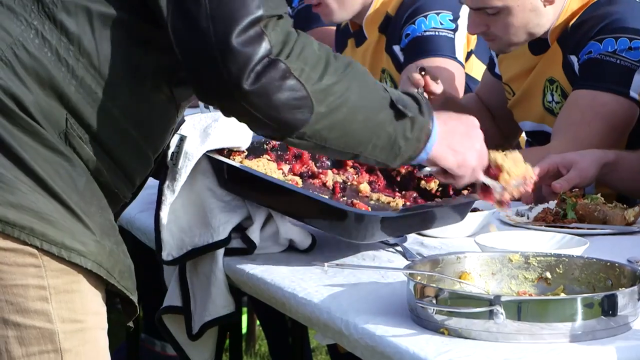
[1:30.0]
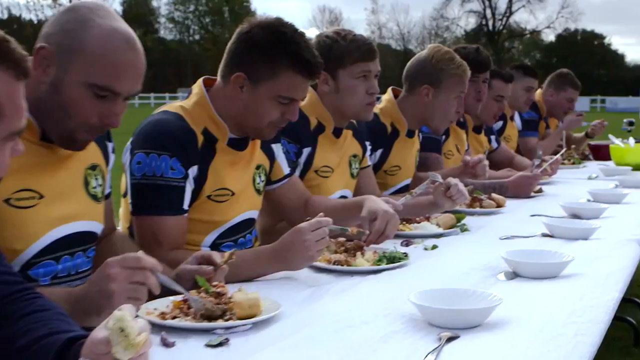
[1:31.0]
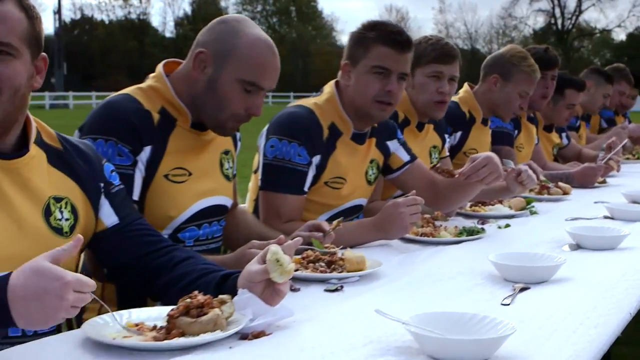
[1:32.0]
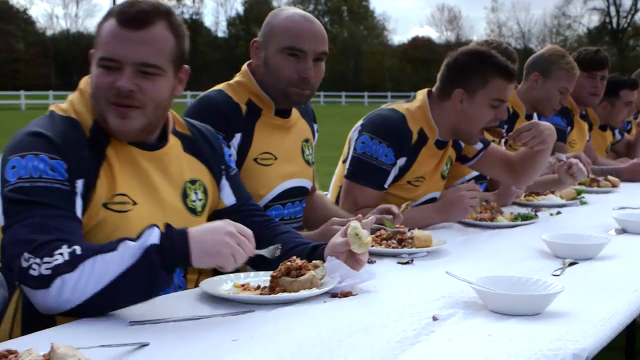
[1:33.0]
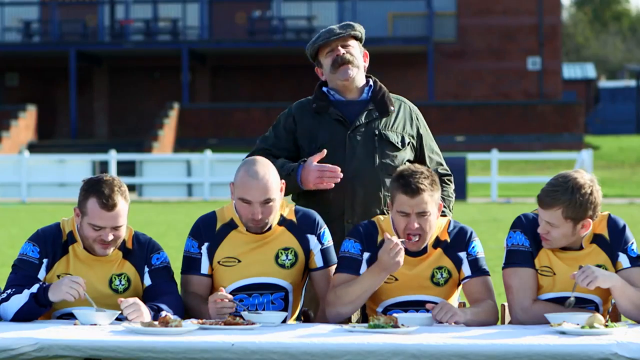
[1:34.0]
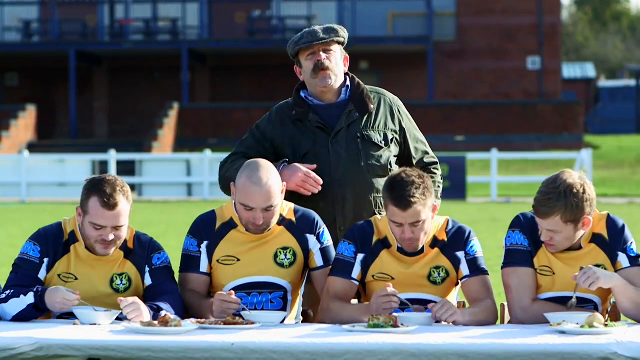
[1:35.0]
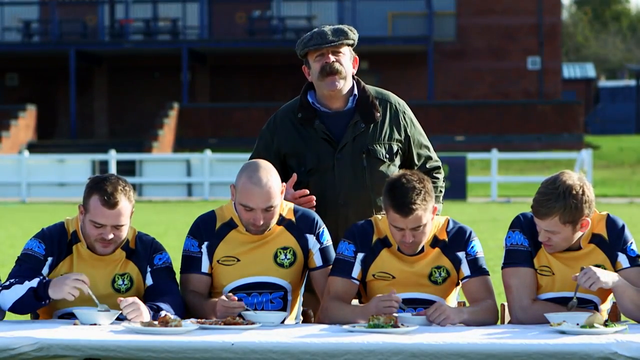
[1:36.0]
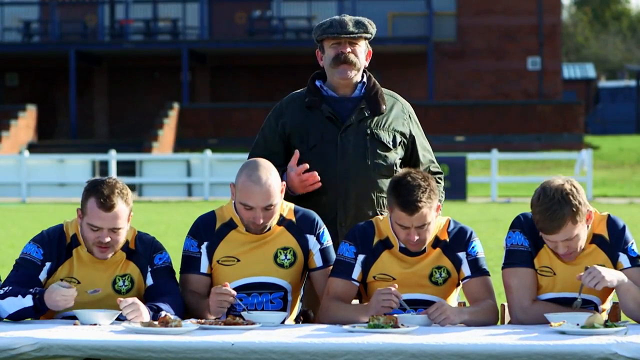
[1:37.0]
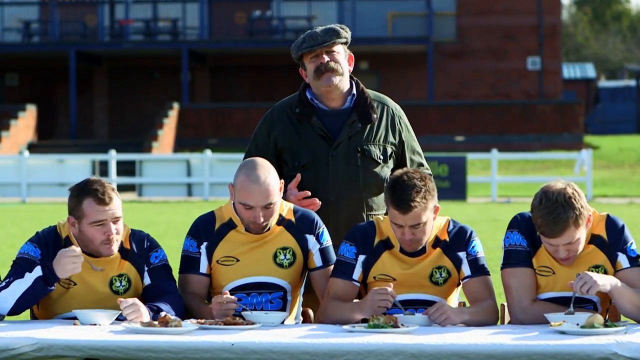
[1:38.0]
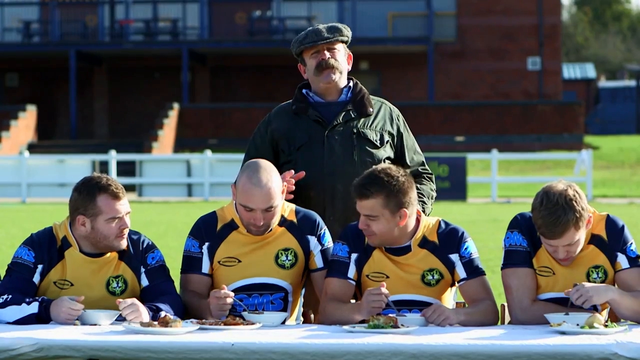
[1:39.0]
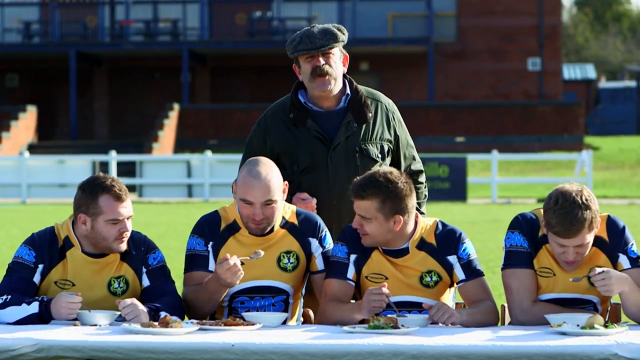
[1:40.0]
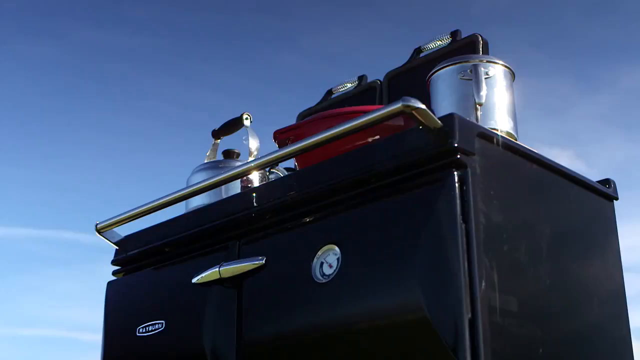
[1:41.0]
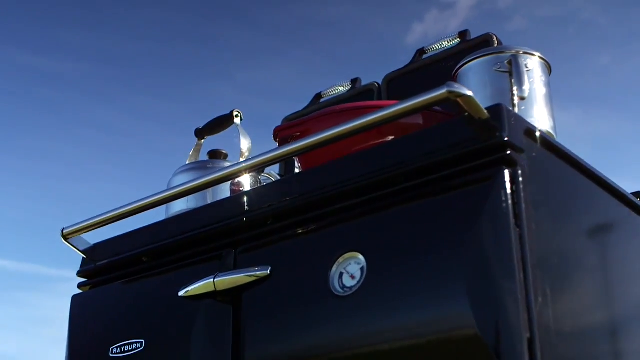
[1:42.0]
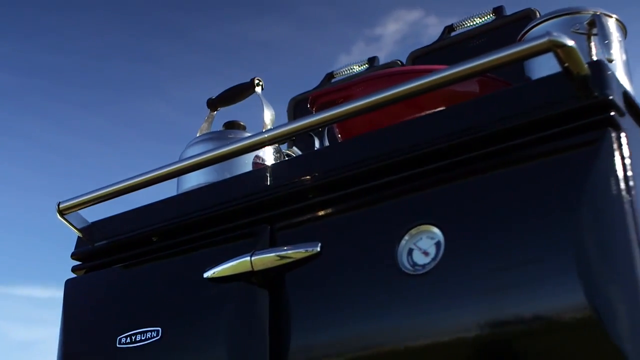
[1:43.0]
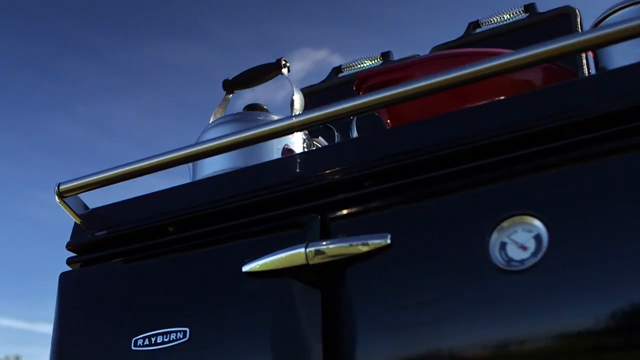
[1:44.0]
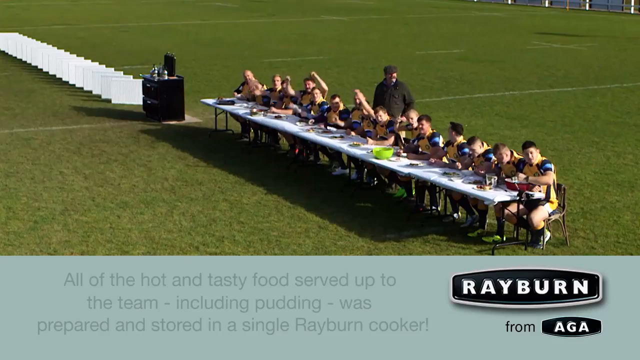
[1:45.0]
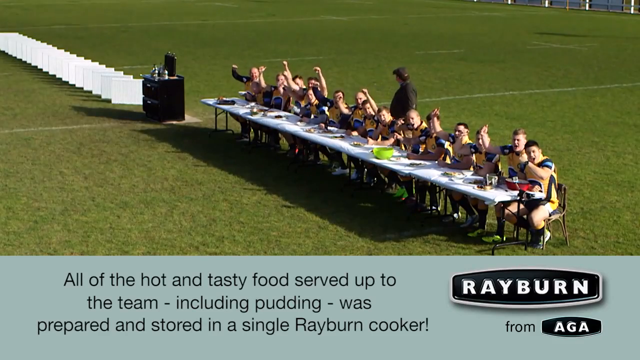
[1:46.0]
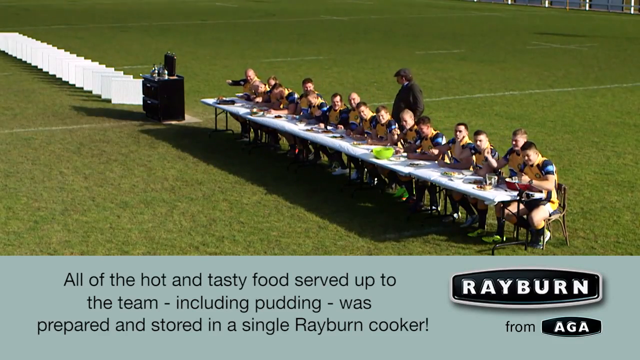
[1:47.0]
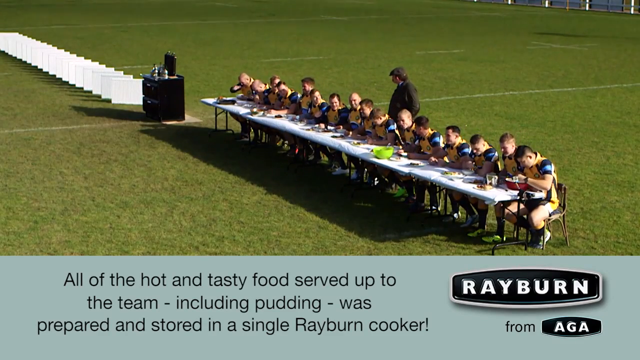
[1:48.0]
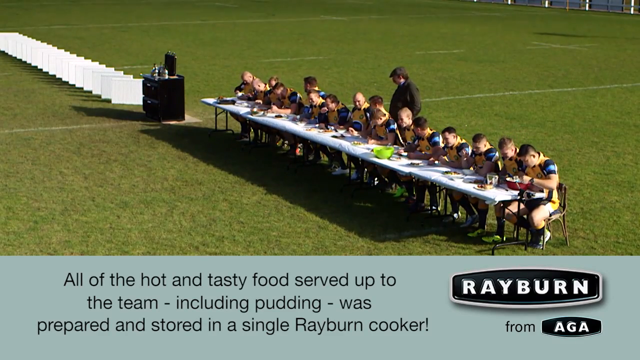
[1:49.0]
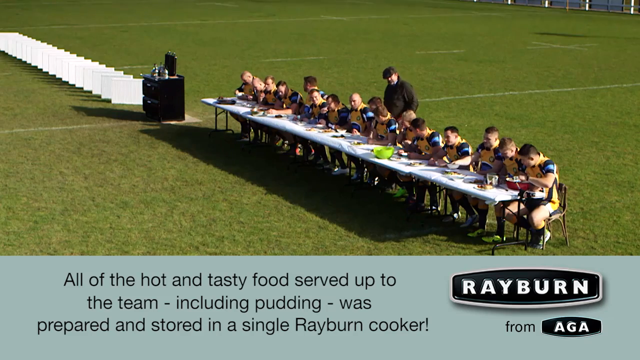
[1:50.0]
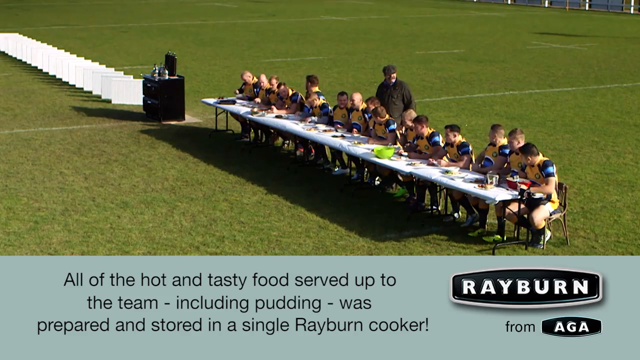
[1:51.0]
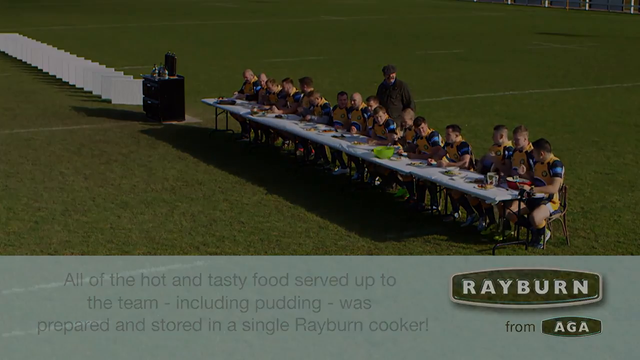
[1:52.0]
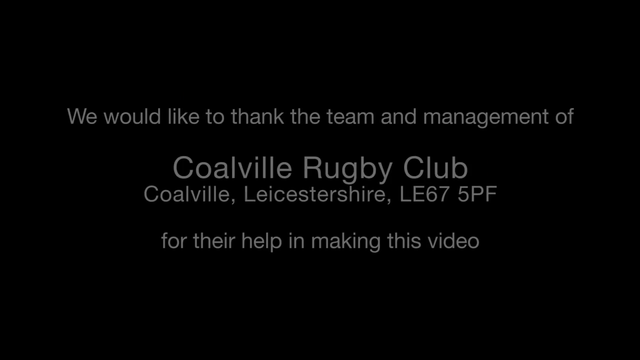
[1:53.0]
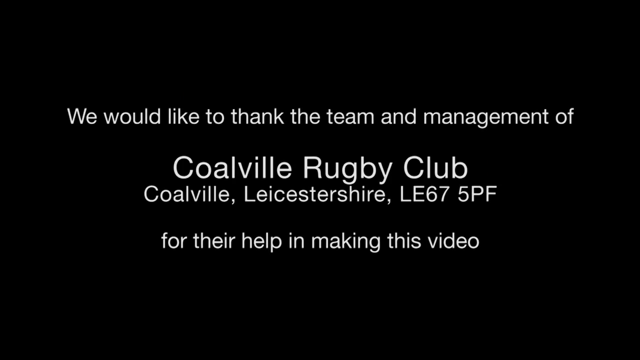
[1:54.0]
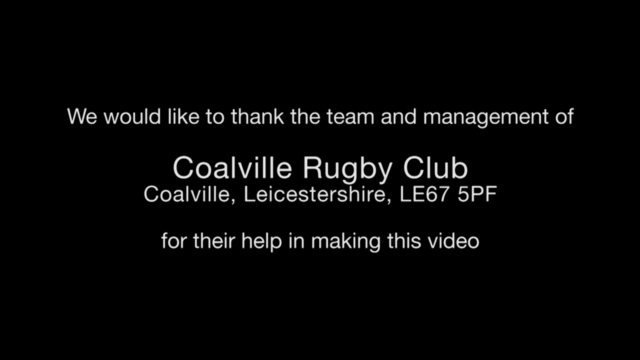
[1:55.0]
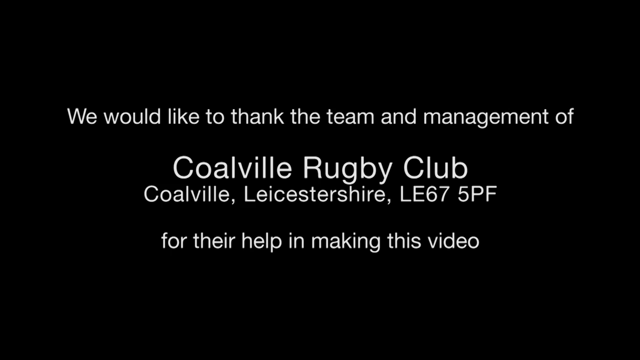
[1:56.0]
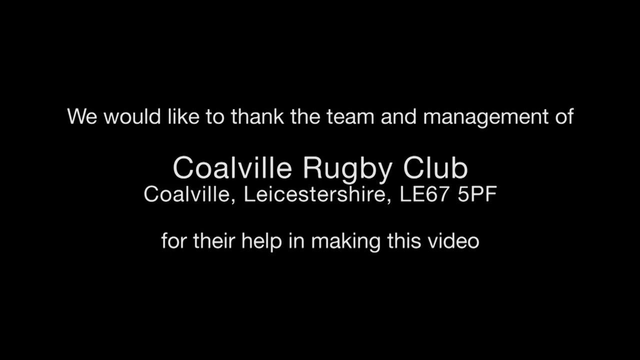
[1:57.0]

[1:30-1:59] The same man in the hat and jacket is seen from behind, leaning against the table while putting different food on the players' plates. A view looking down the table from the left-hand side shows all the players seated and eating their food as the camera kind of moves down the table toward the viewer. From a view looking straight at the table, the man with the cap and jacket stands behind the players, looking at the camera and speaking, kind of leaning back and then forward again and using his right hand for emphasis at certain points. The camera then kind of looks up at the grill-like device from down on the ground; it has doors on the front with two silver handles and what looks like a little gauge showing the temperature, and the camera kind of moves toward the left. The video ends with all the rugby players seated at the table kind of putting up their hands at once. The screen goes black, and white text reads "We would like to thank the team and management of Colville Rugby Club."